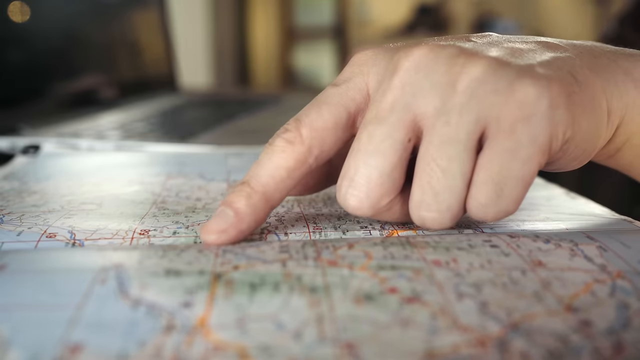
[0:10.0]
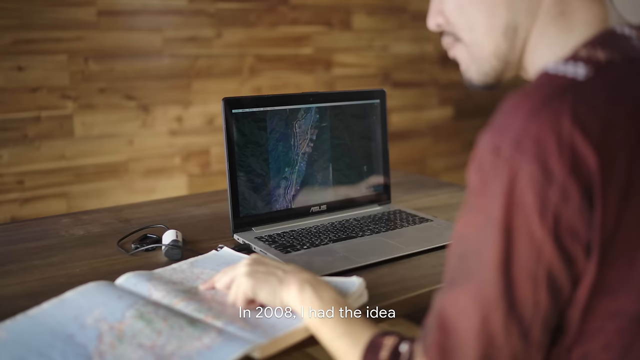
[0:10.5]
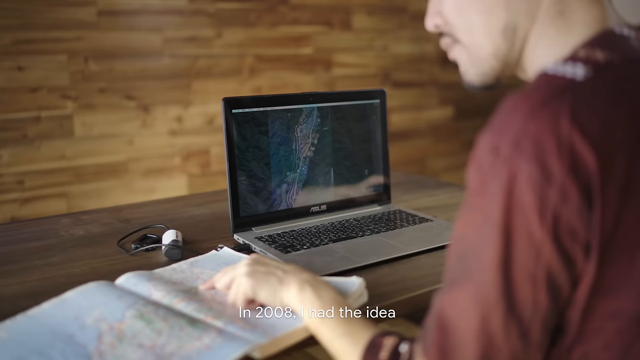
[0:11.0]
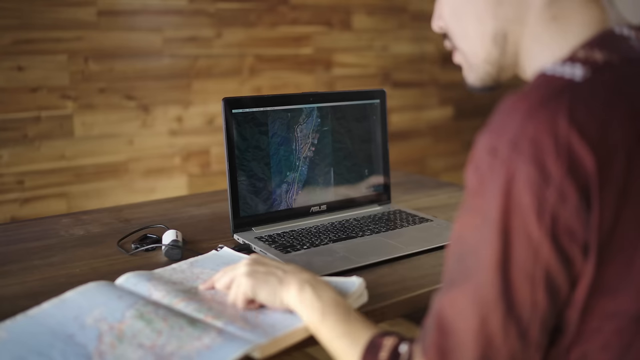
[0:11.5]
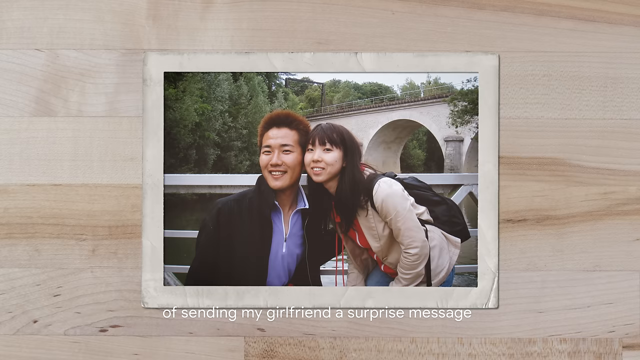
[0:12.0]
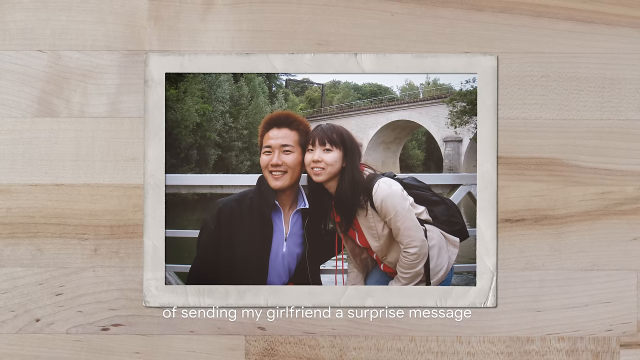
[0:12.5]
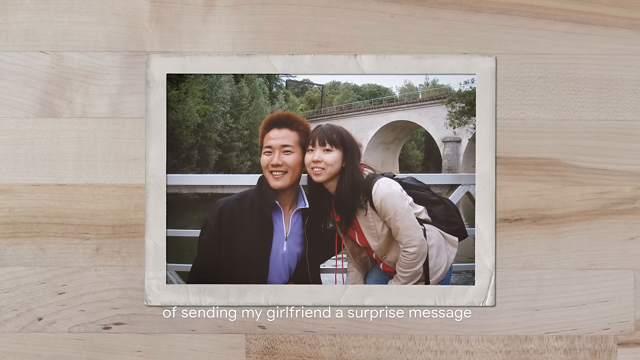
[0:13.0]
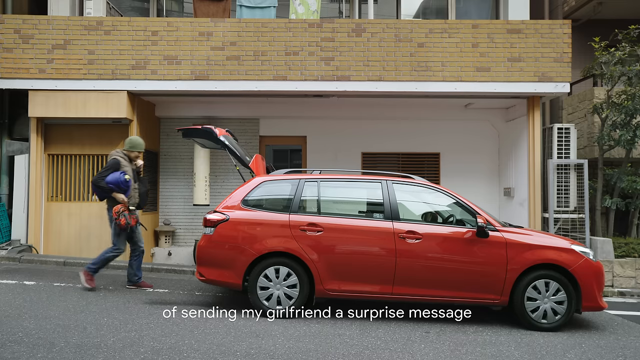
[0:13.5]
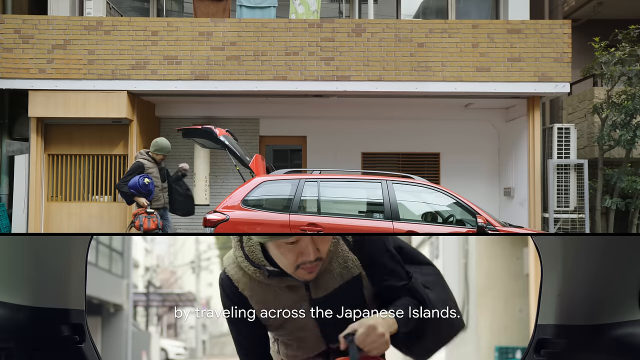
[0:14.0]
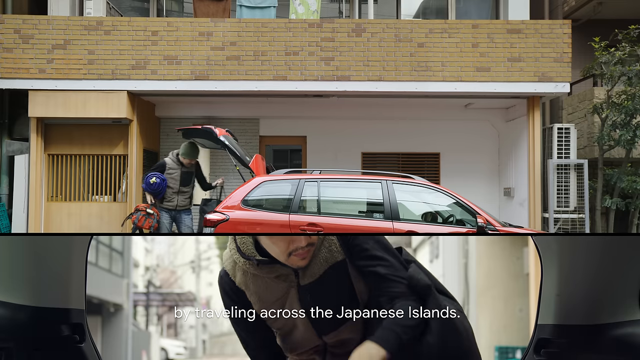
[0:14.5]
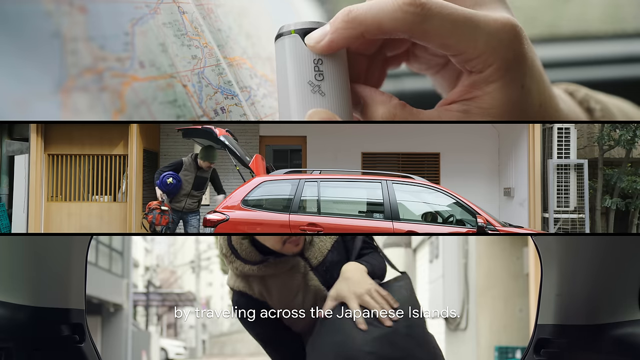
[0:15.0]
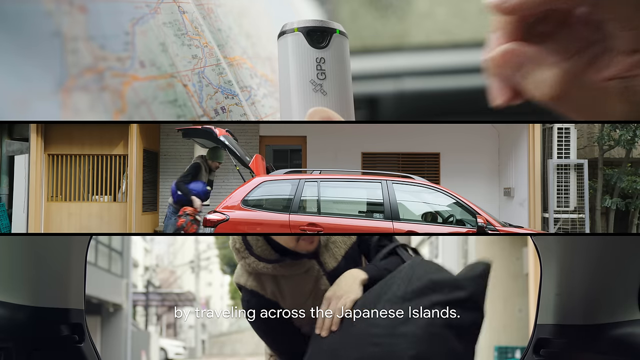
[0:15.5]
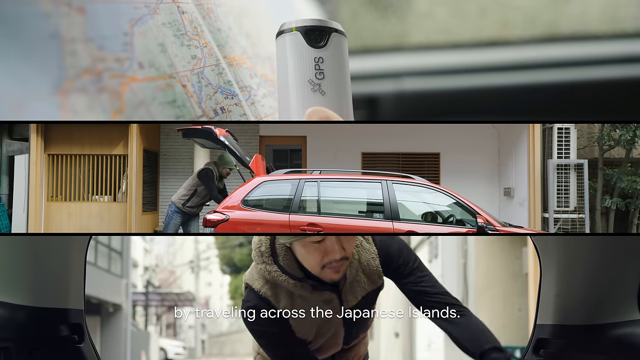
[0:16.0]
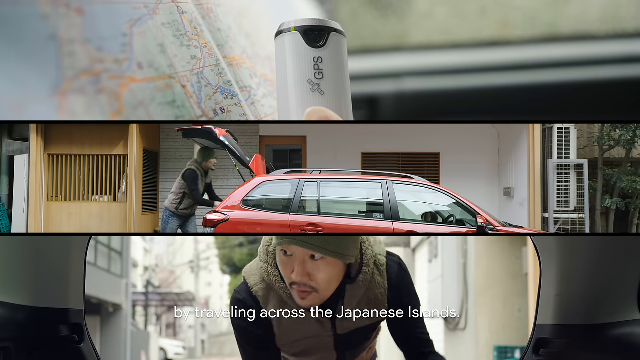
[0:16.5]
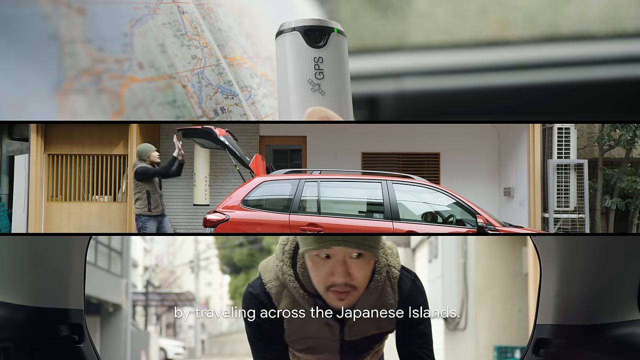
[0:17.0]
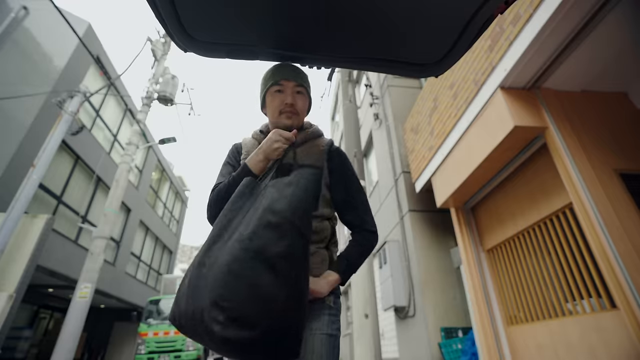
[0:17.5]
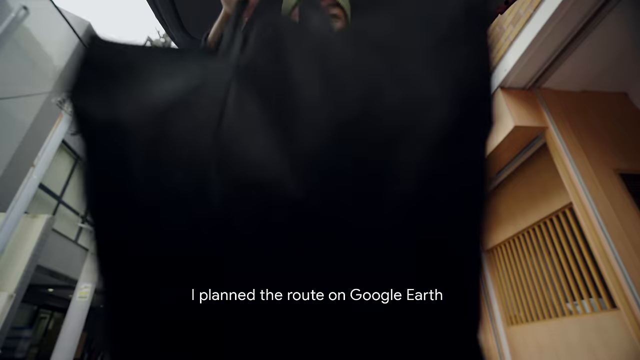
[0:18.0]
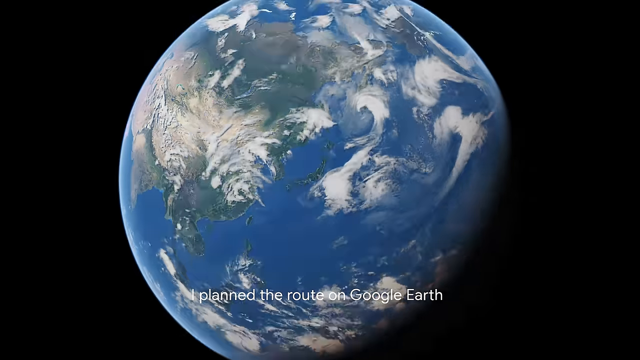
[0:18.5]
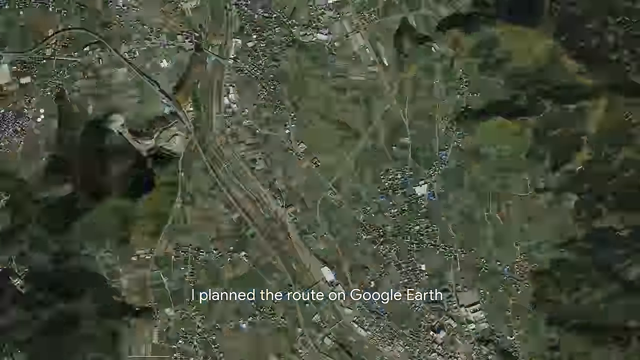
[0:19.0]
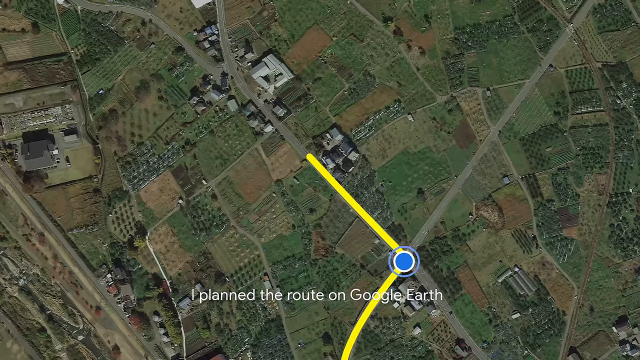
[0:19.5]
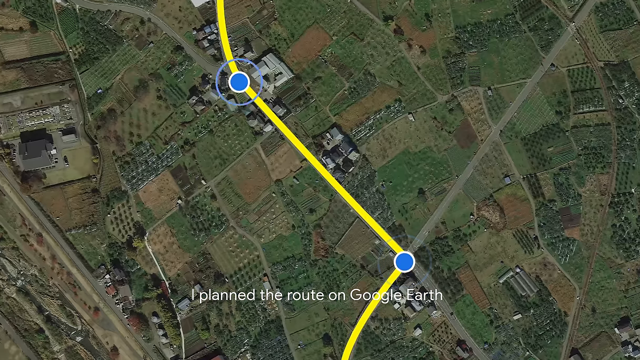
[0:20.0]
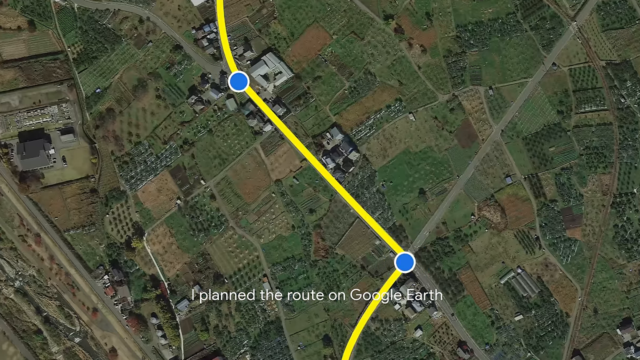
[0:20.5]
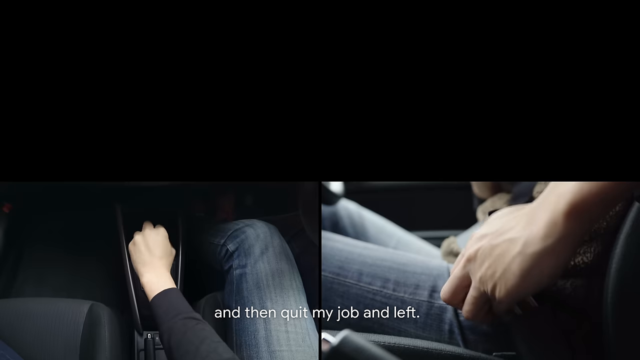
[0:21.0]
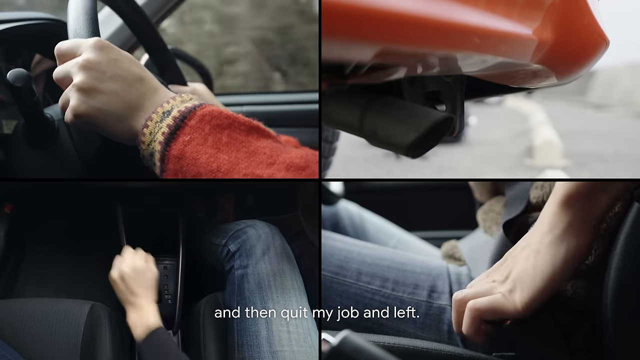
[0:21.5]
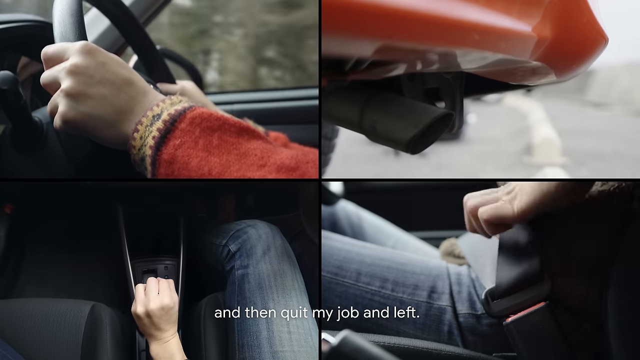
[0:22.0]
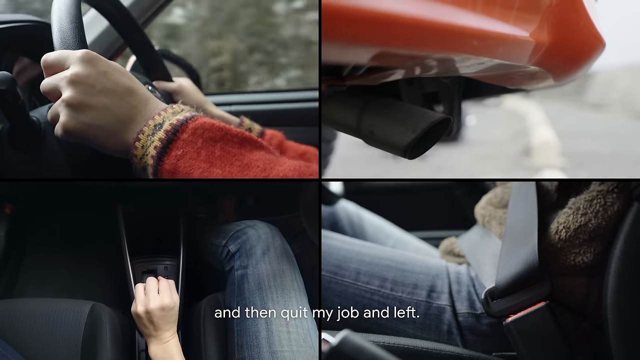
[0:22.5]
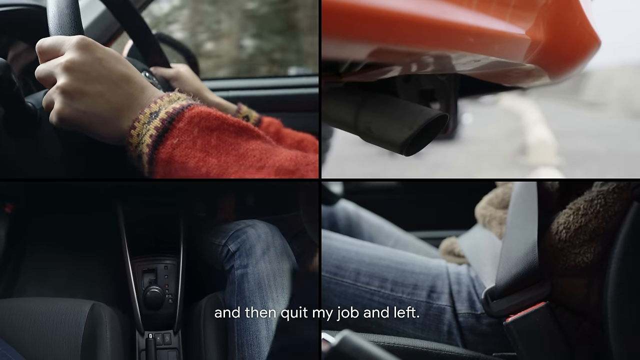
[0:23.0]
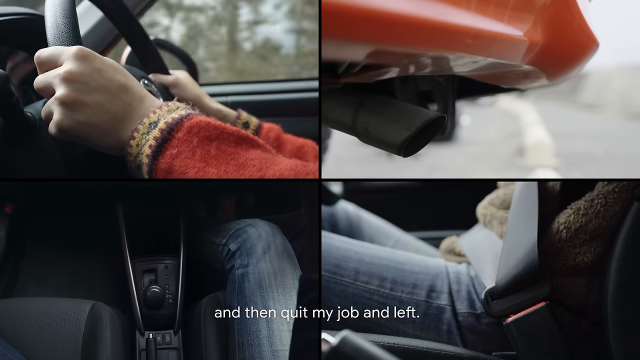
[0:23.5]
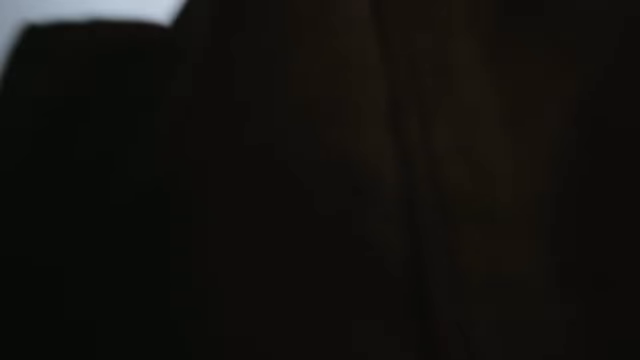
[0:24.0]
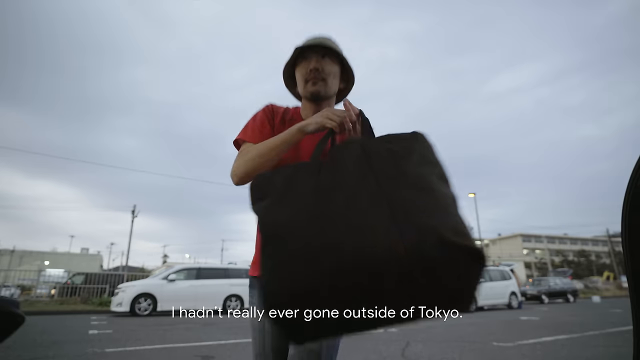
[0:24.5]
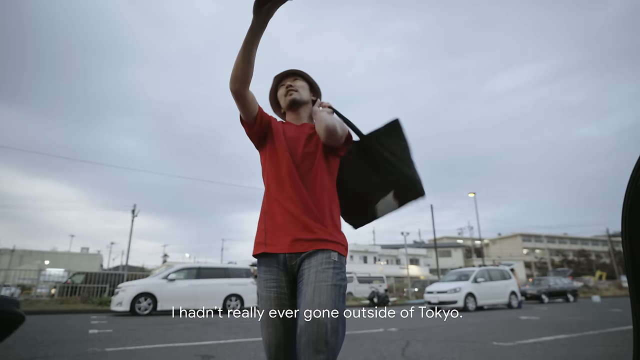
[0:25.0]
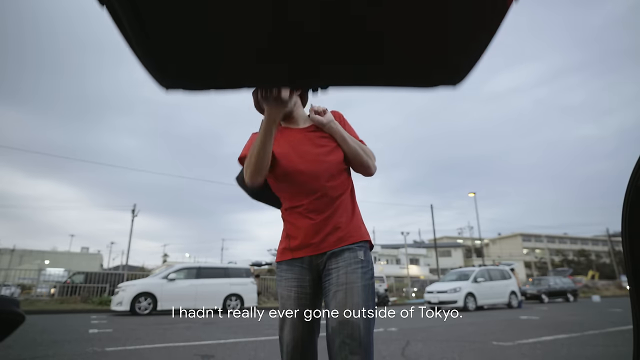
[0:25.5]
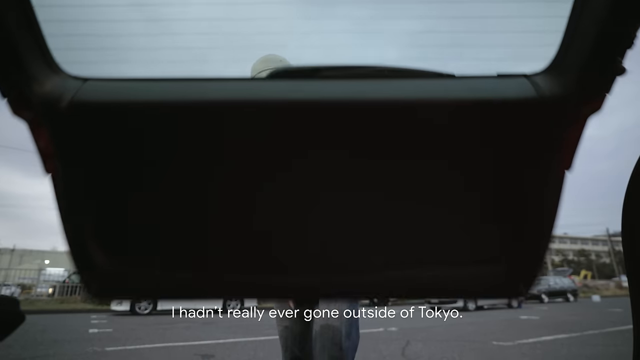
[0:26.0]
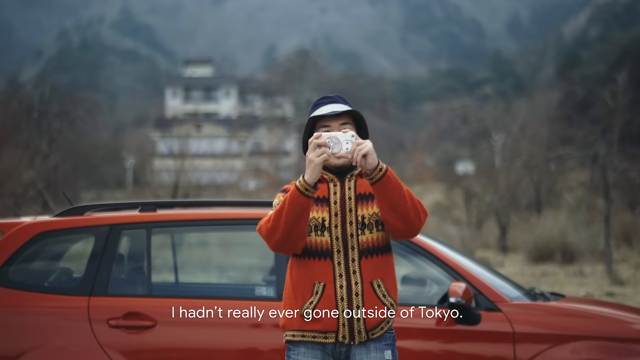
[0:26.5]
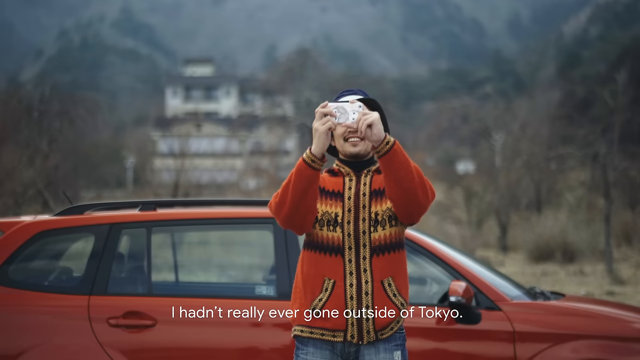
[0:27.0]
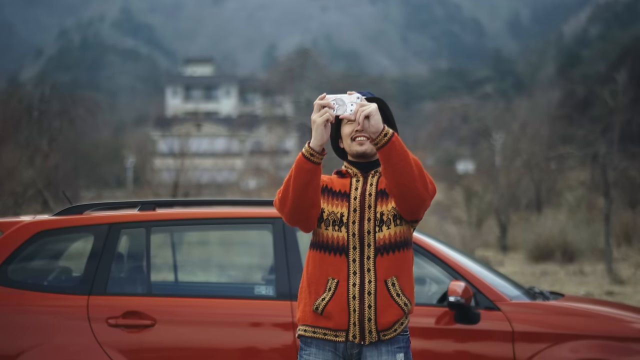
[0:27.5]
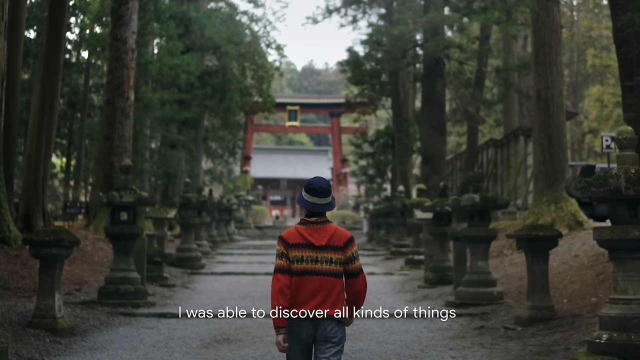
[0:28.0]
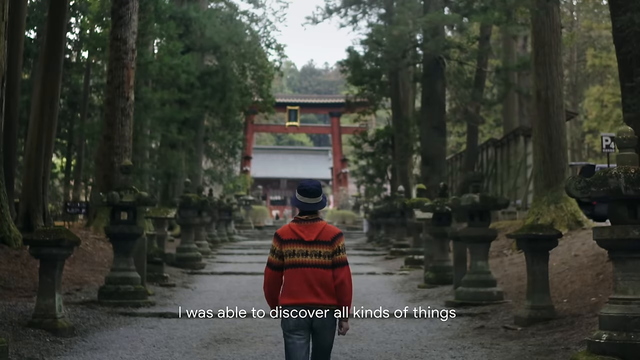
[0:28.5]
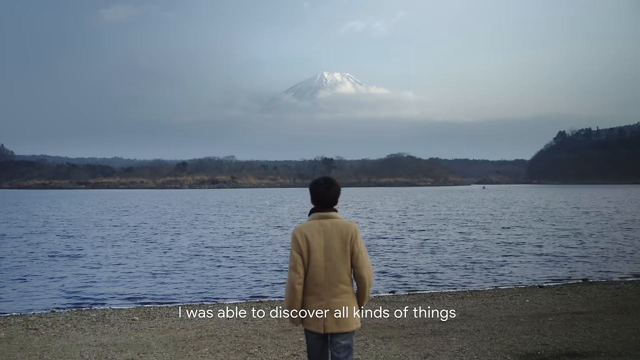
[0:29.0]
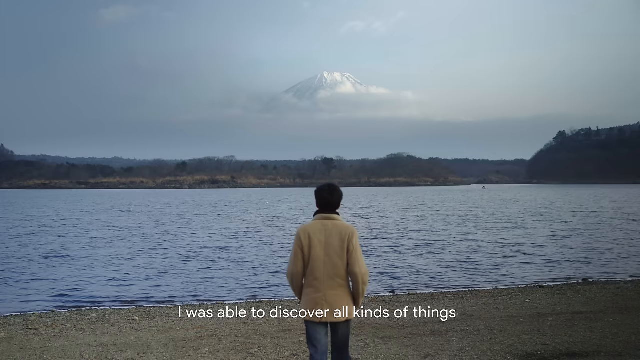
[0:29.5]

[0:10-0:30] A map appears with a man's finger on it, and he sits at a desk looking at a laptop. A picture of him with his girlfriend, an Asian woman, follows, with text reading "sending my girlfriend a surprise message by traveling across the Japanese island." Very fast-moving images follow: three different images run horizontally across the screen, with a red SUV in the middle, and at the bottom he is packing a bag. He puts a bag into a trunk. A Google Earth image with lines and destinations on it appears, and he says "I quit my job and left." The screen splits into four different images. He closes a trunk, and then he is in Japan, taking pictures and walking along a shore.